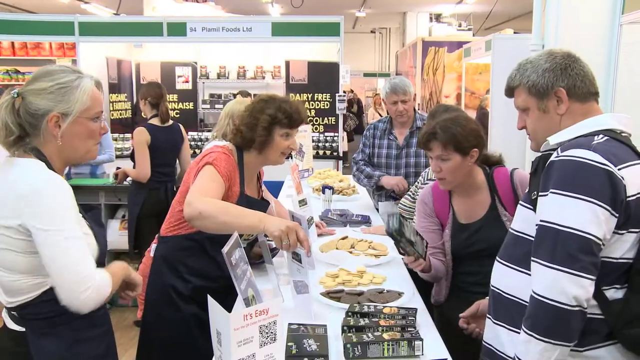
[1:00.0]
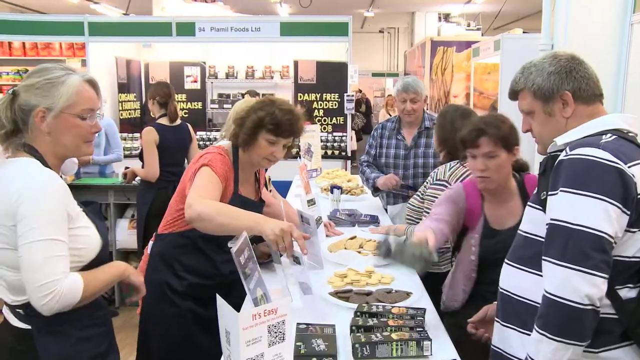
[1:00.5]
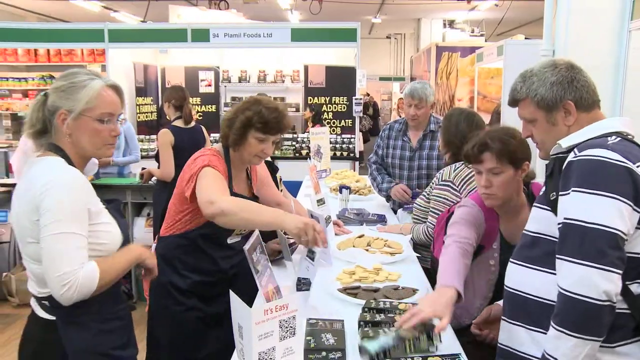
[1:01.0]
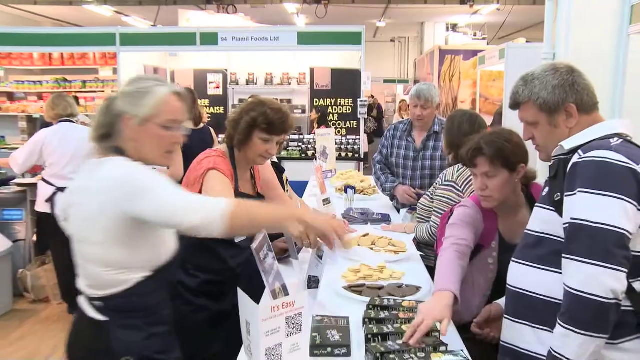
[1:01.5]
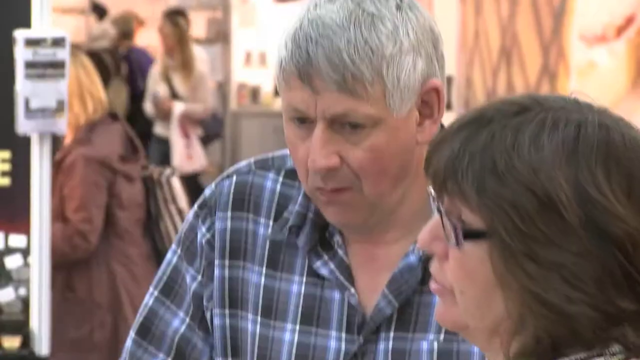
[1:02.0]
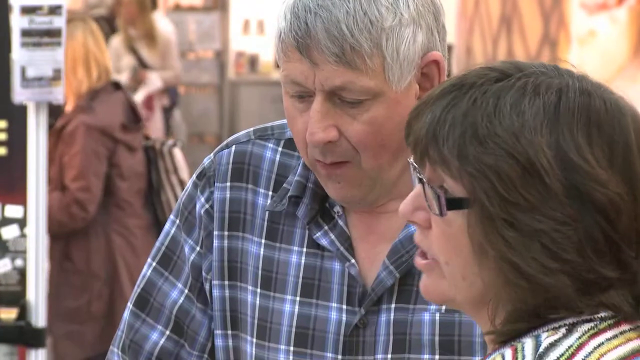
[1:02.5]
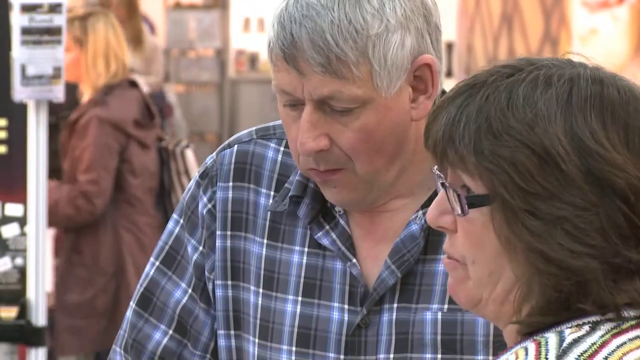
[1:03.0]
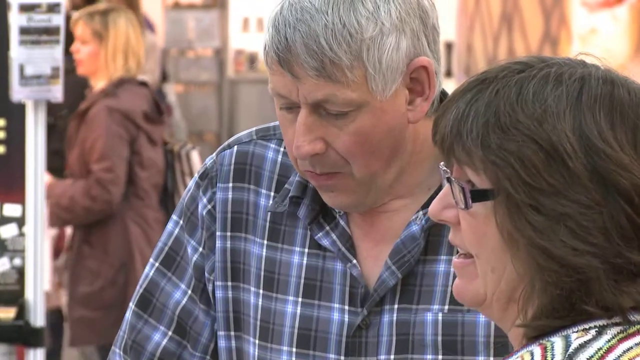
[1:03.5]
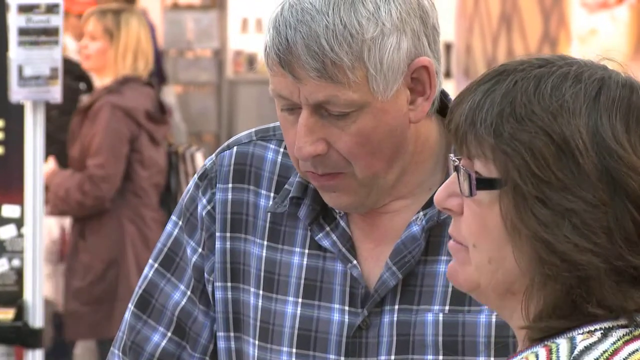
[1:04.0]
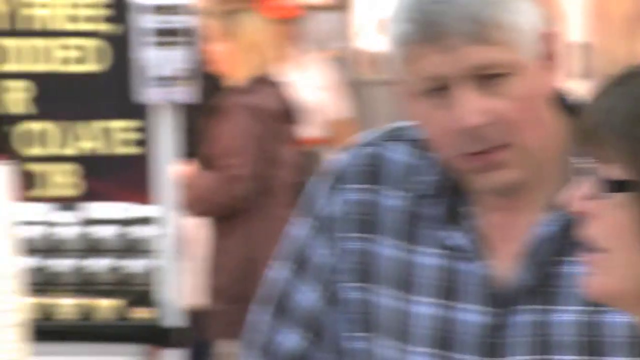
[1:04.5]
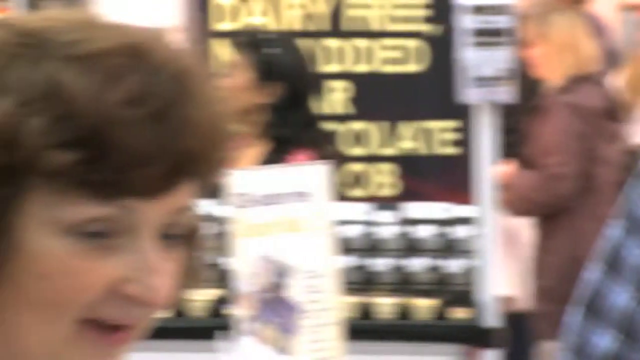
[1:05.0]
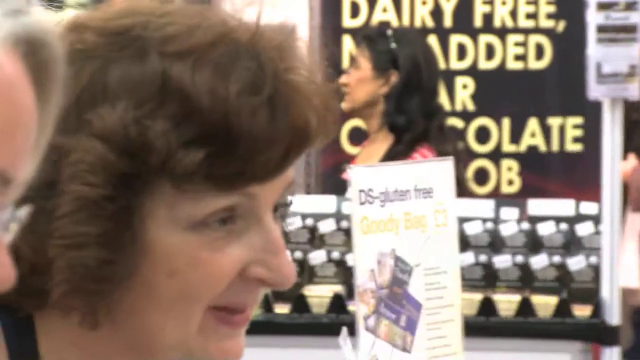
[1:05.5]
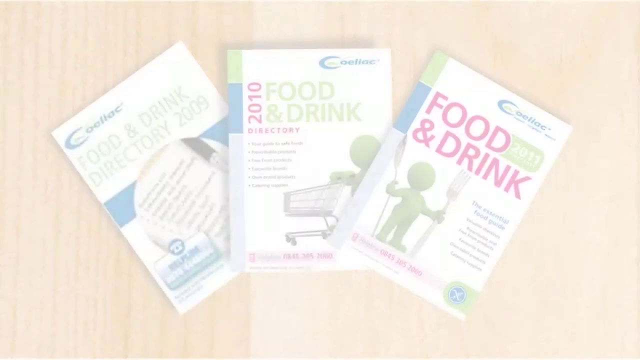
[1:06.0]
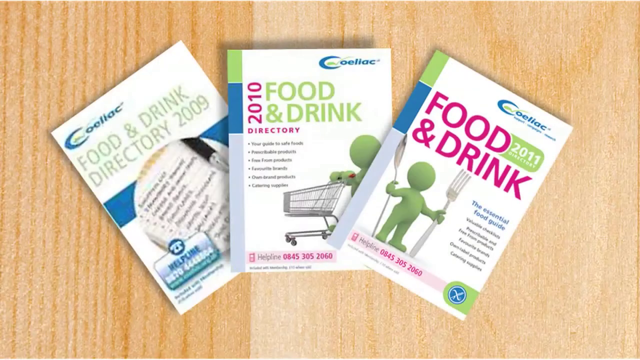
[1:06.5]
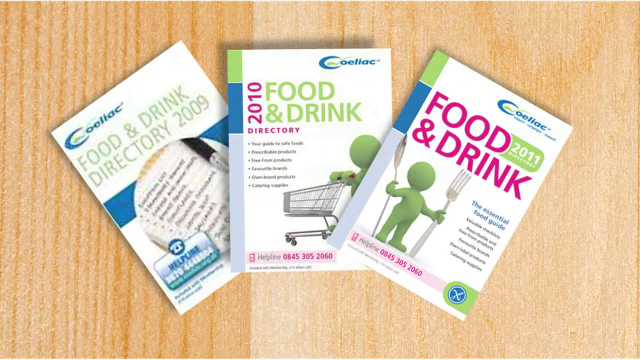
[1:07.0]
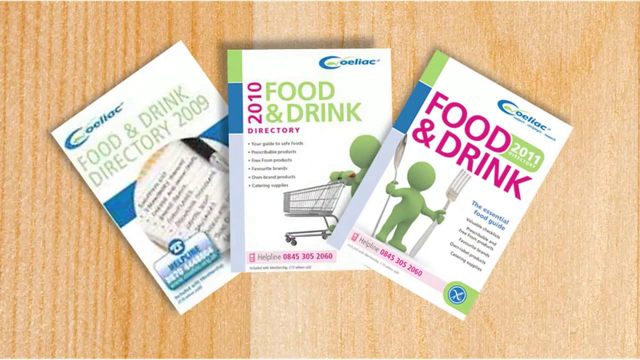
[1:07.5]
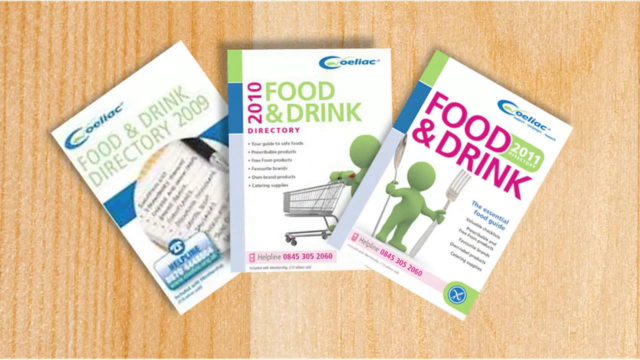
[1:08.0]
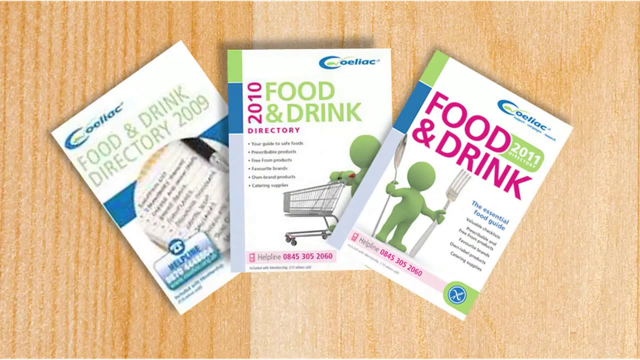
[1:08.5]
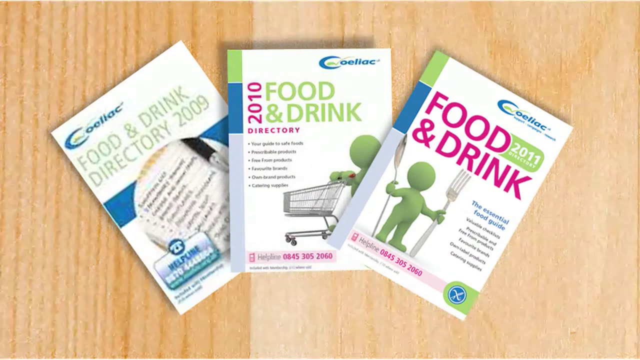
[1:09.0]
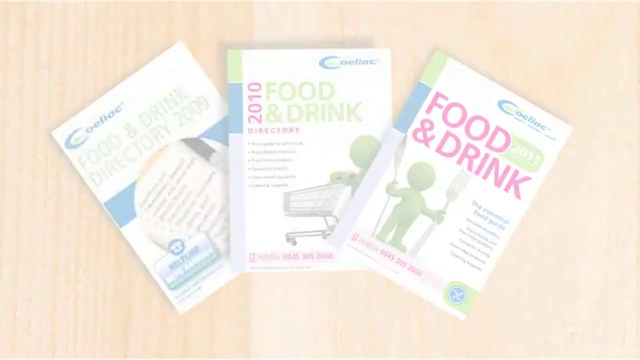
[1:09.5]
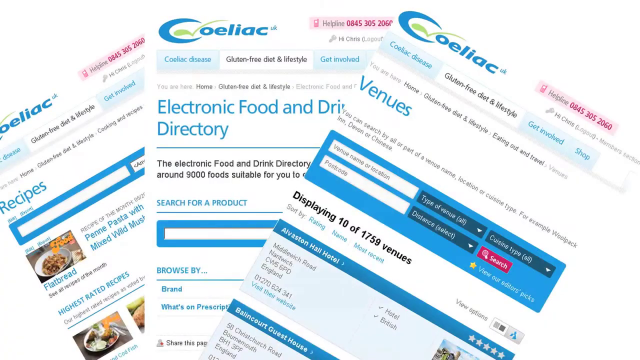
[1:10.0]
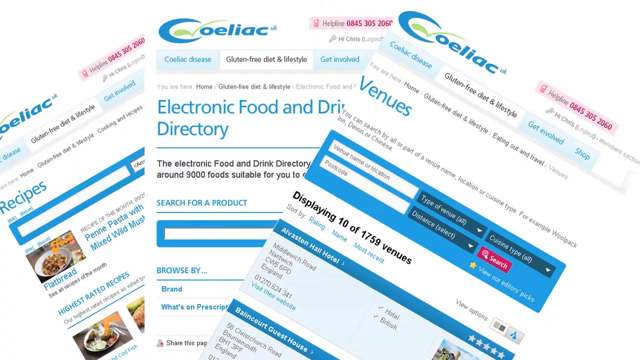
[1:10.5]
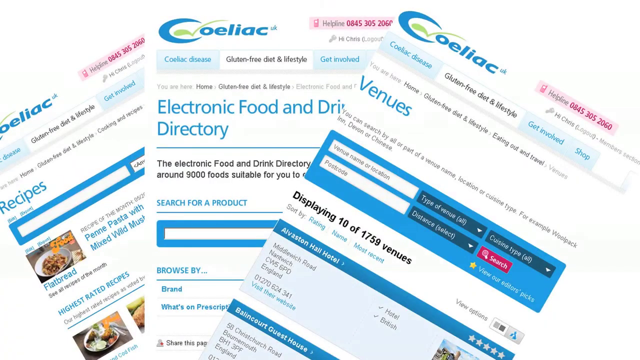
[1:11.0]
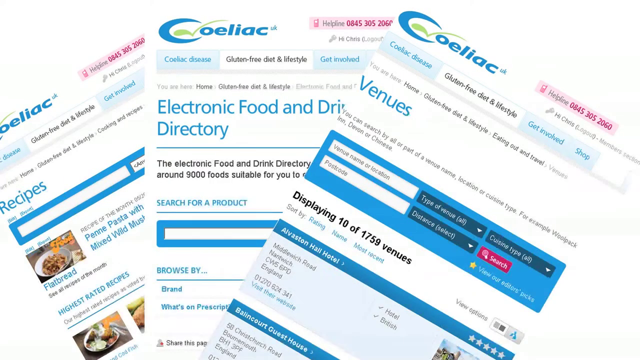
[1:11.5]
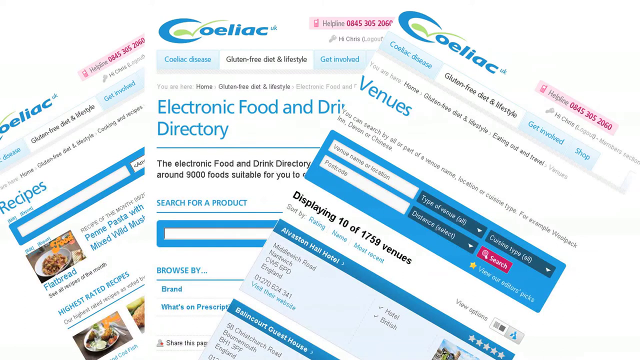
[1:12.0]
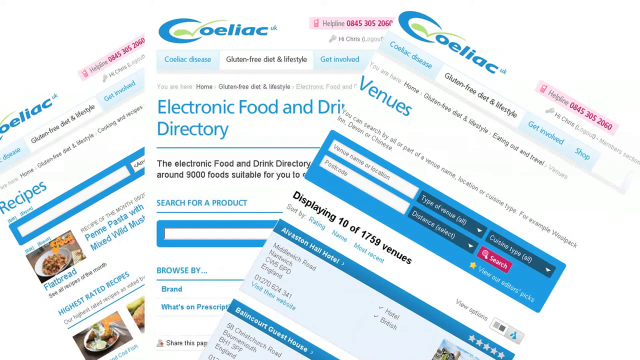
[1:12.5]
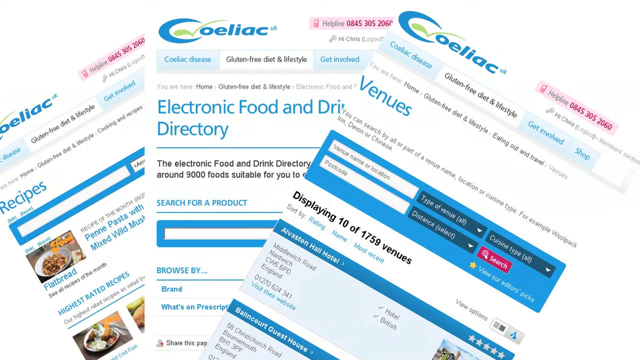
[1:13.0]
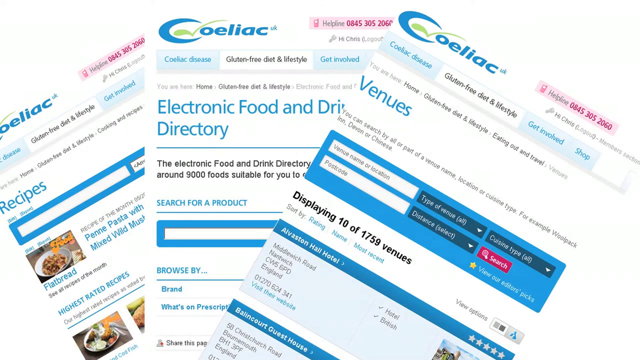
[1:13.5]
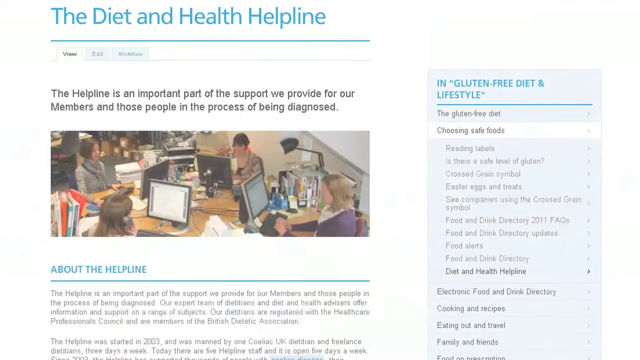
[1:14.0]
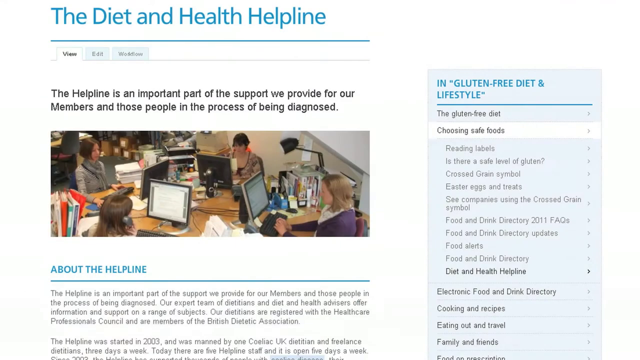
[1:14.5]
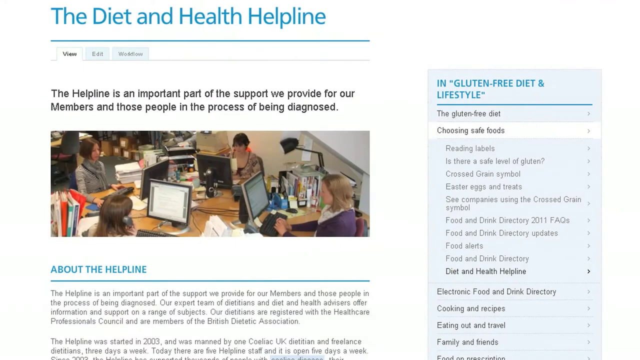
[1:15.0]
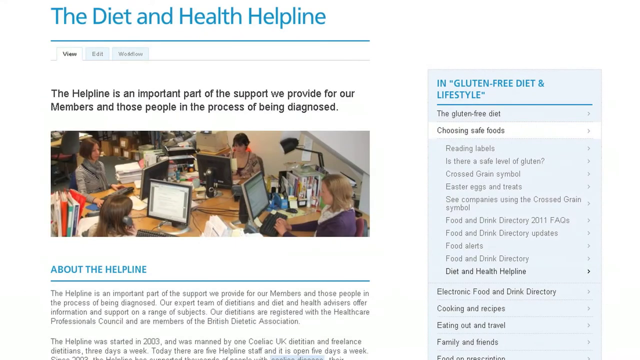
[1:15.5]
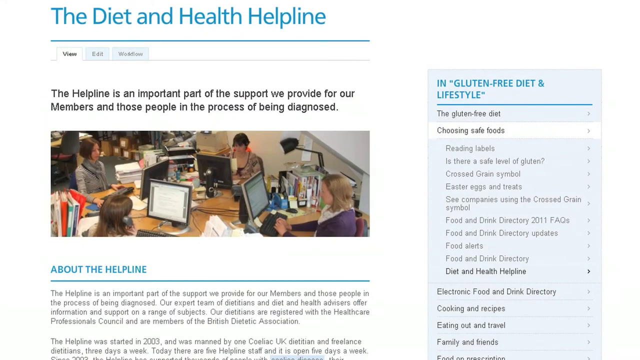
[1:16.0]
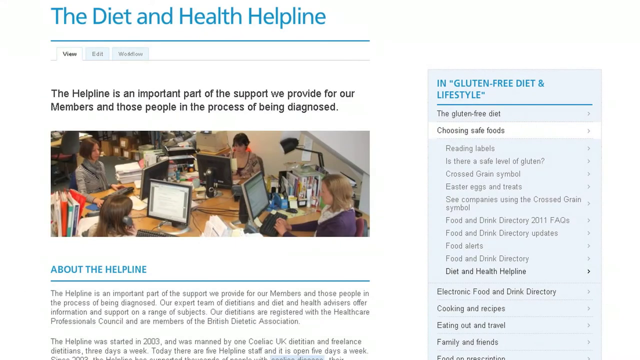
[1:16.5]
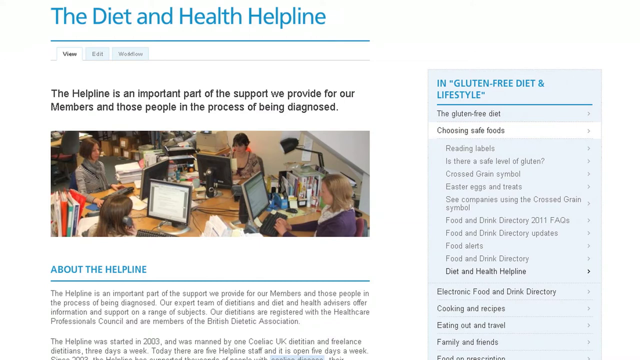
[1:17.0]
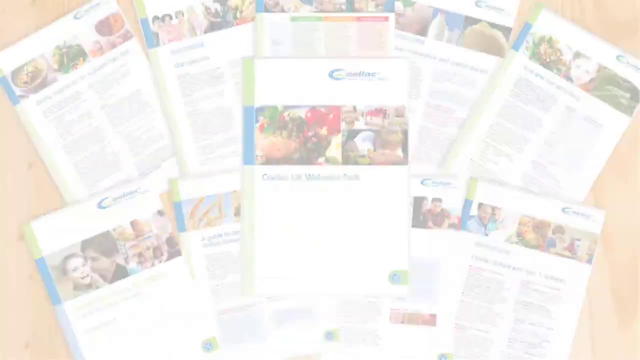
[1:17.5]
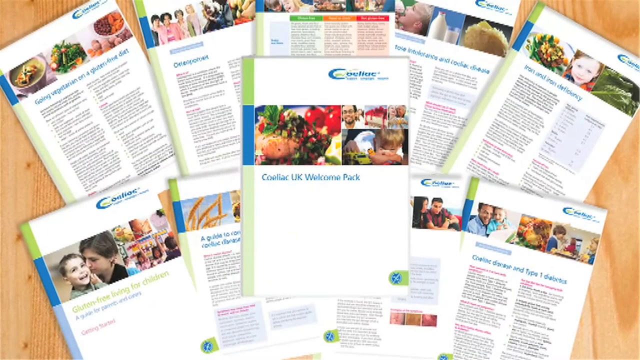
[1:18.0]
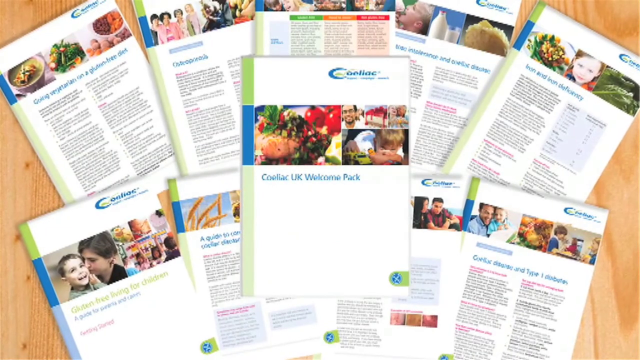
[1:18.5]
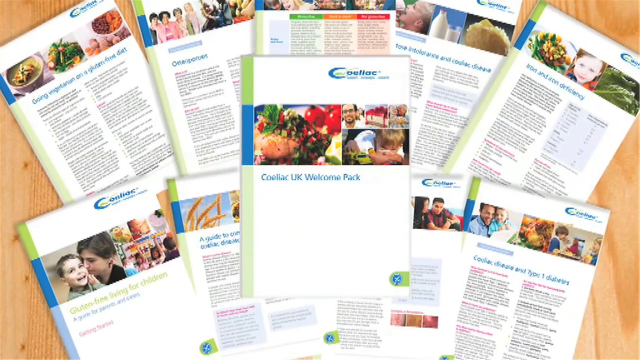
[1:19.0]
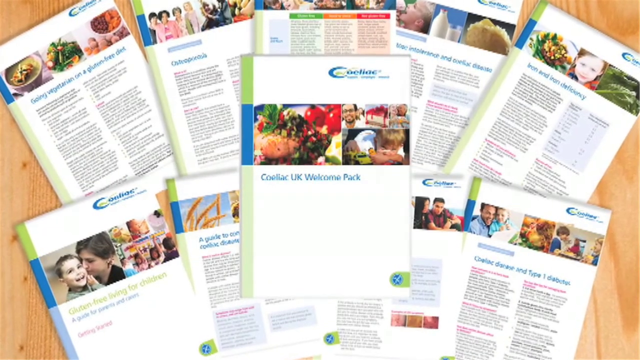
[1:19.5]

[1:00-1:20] People are gathered around what looks to be a group handing out food samples. On the left, women wearing black aprons are behind a countertop or table; on the right are what look to be plates or trays filled with various foods, apparently cookies and snacks. The women interact with the people on the other side of the table who are getting the samples. Next is an image of a table with what look like guides for what to eat and drink, all with "Coeliac" on top; they appear to be manuals for different years, reading "Food and Drink Directory 2009," "Food and Drink Directory 2010" and "Food and Drink Directory 2011." More images appear to give advice on eating, with items labeled "Recipes," "Food and Drinks Directory" and "Venues."